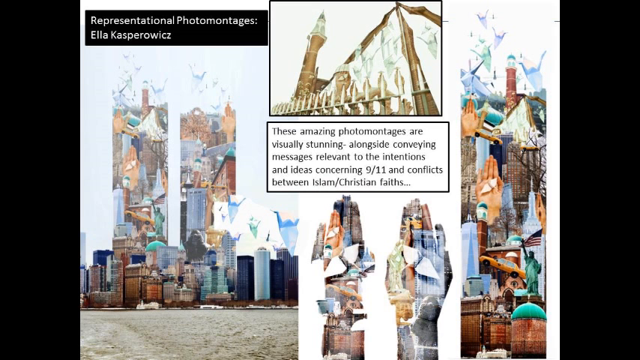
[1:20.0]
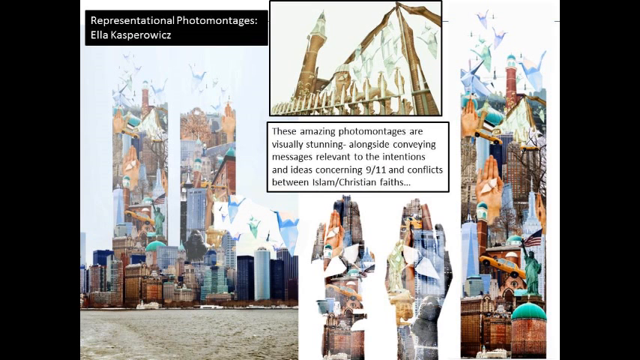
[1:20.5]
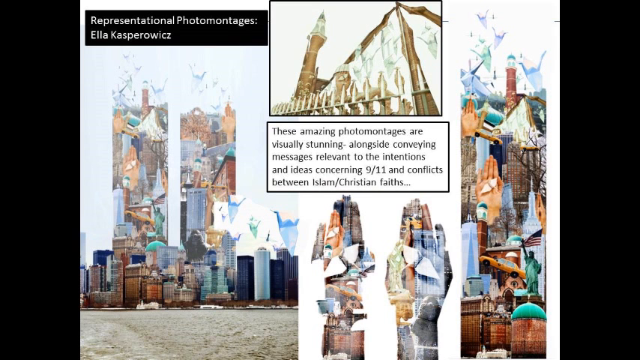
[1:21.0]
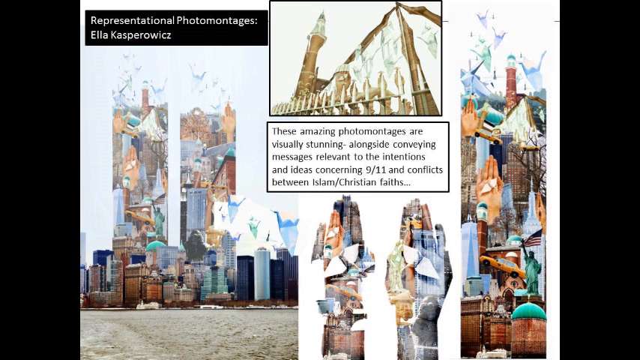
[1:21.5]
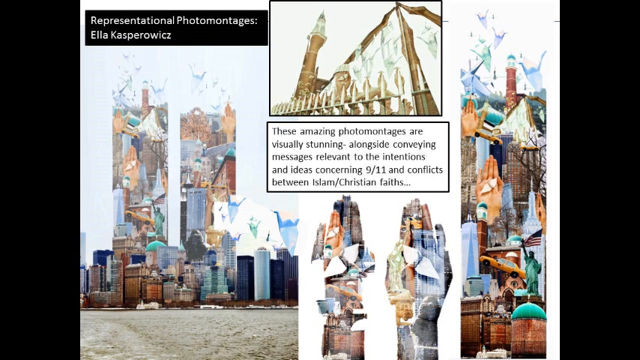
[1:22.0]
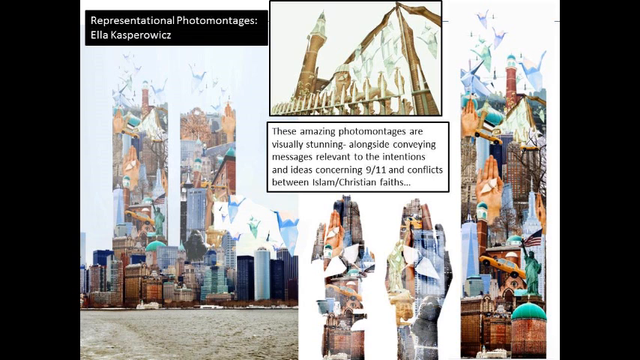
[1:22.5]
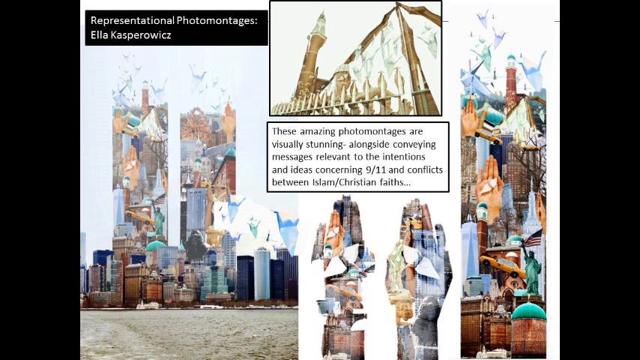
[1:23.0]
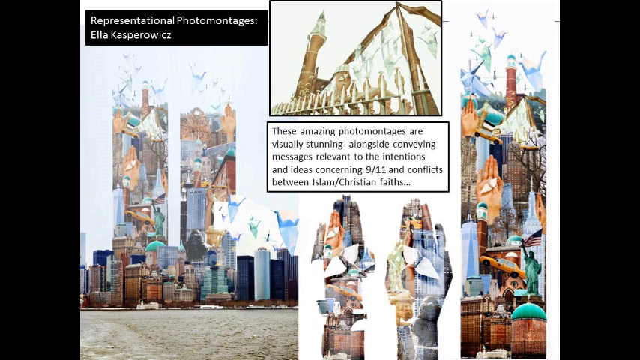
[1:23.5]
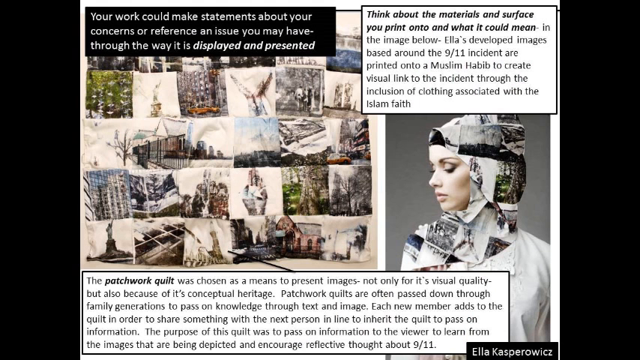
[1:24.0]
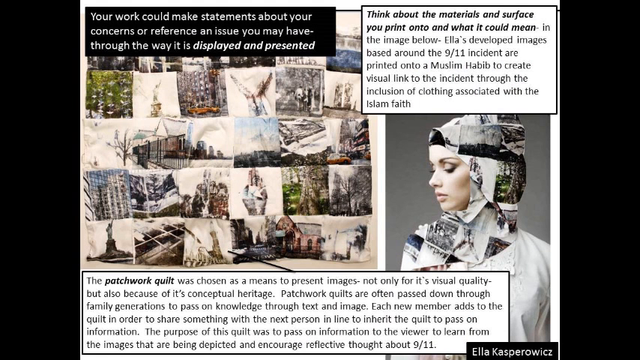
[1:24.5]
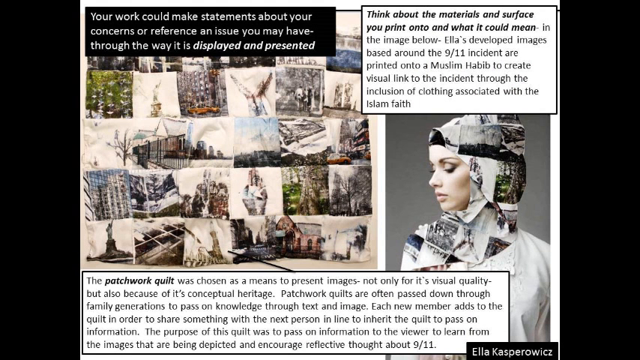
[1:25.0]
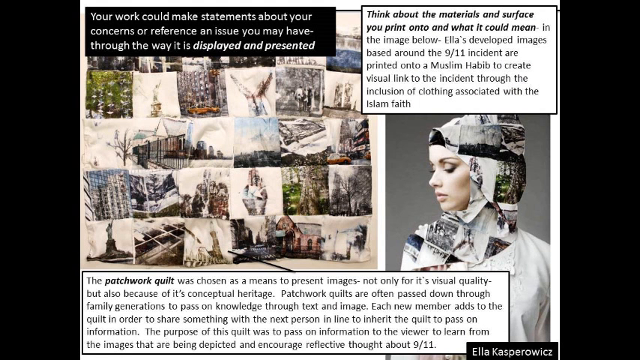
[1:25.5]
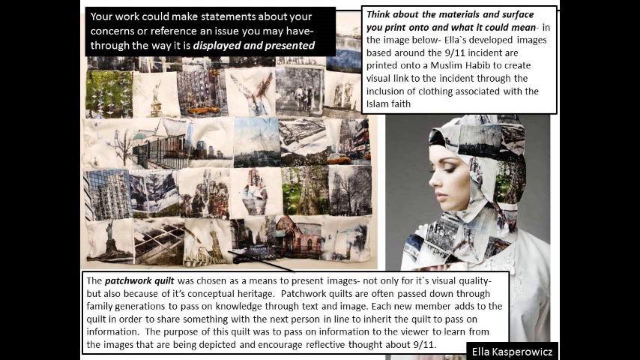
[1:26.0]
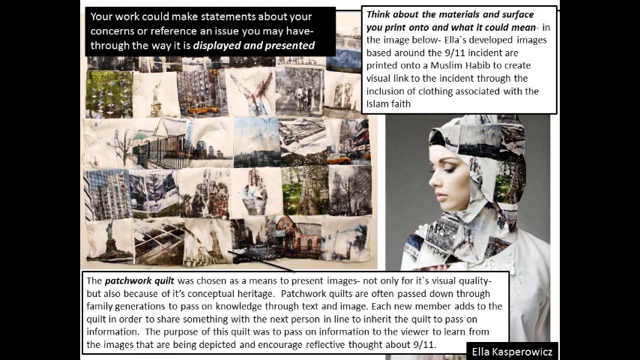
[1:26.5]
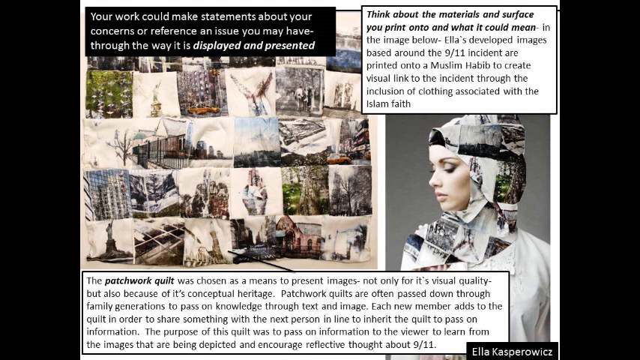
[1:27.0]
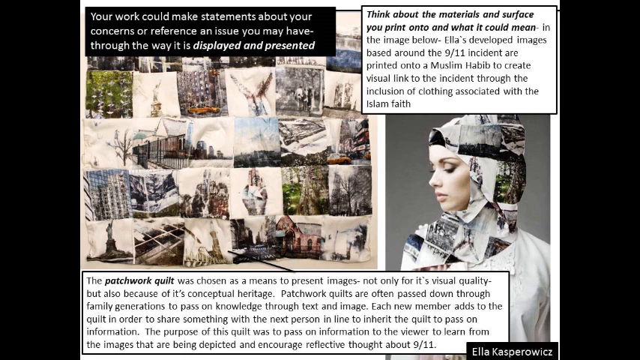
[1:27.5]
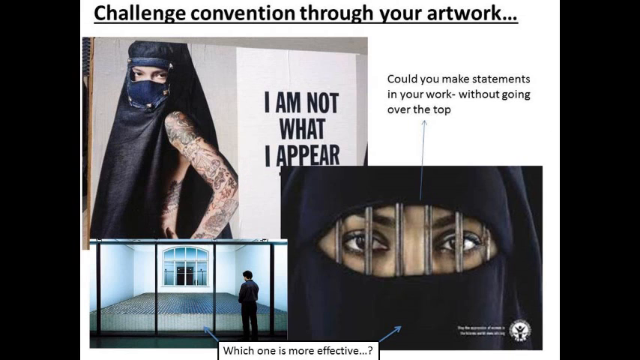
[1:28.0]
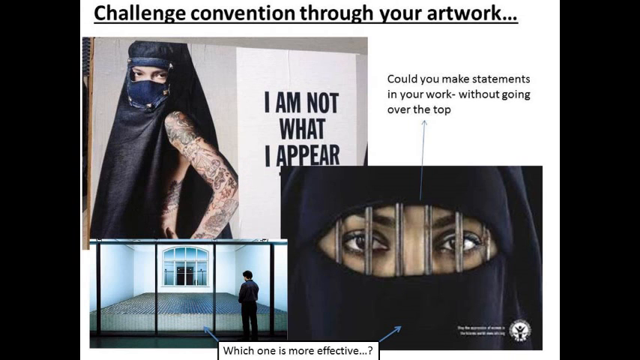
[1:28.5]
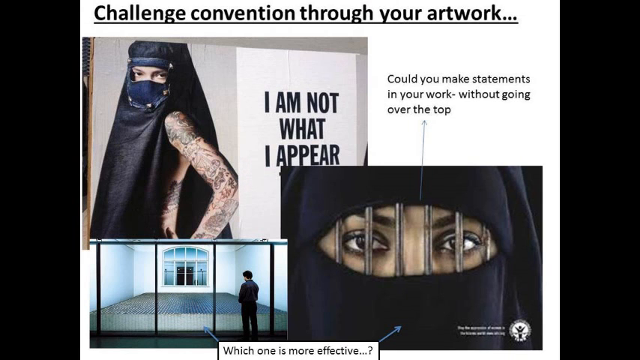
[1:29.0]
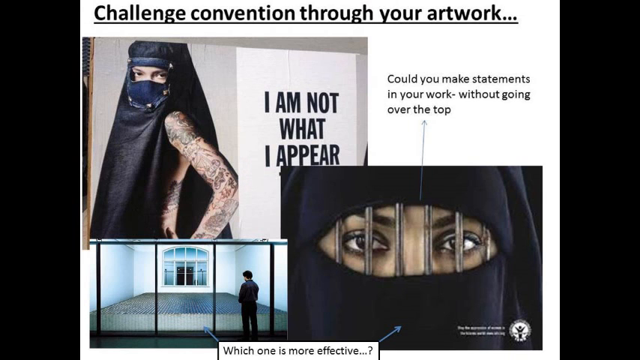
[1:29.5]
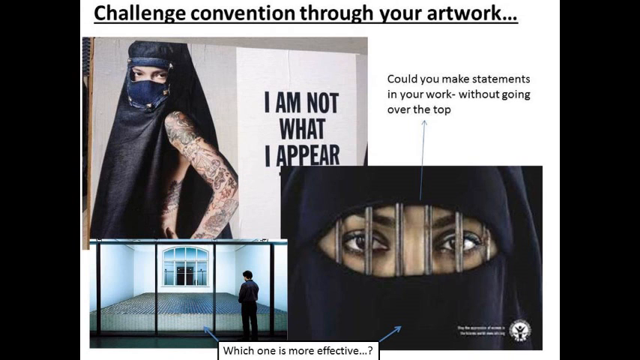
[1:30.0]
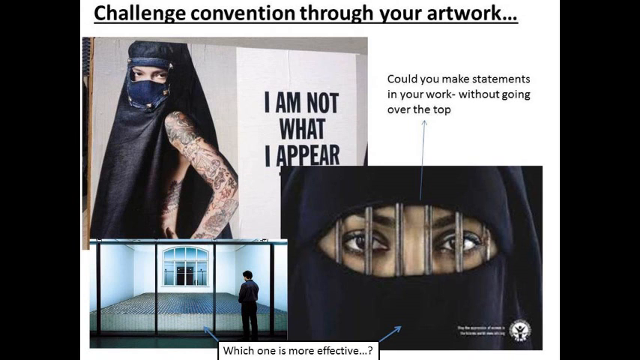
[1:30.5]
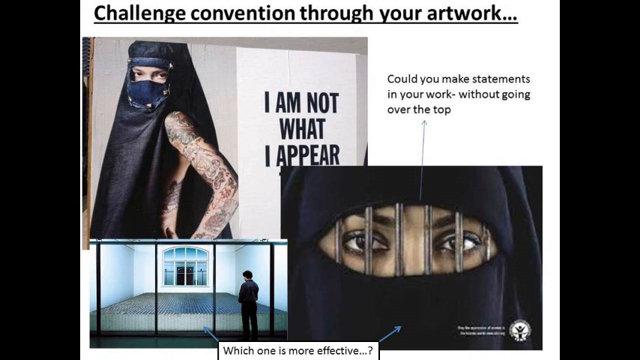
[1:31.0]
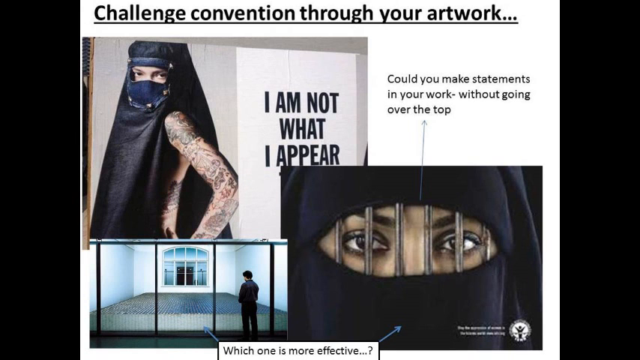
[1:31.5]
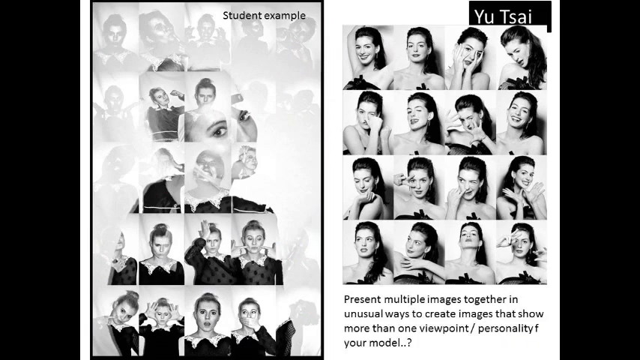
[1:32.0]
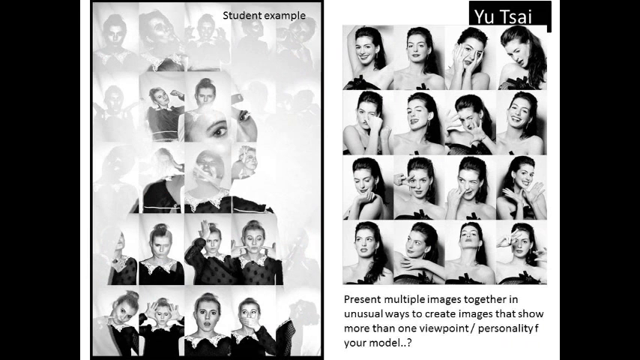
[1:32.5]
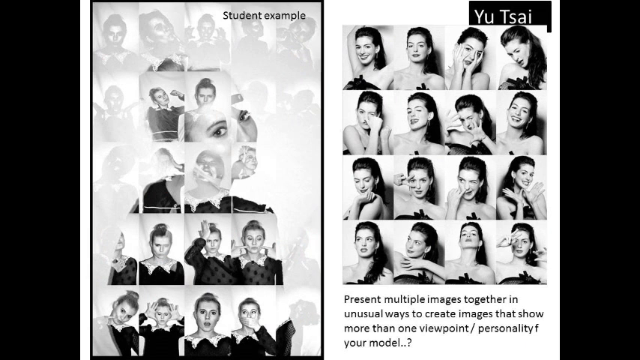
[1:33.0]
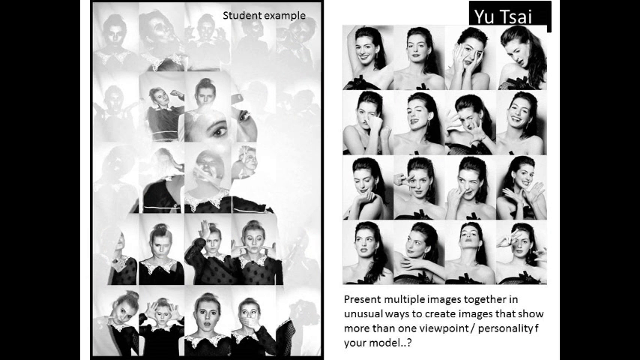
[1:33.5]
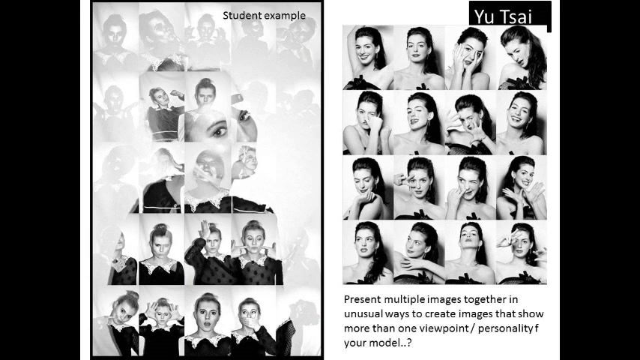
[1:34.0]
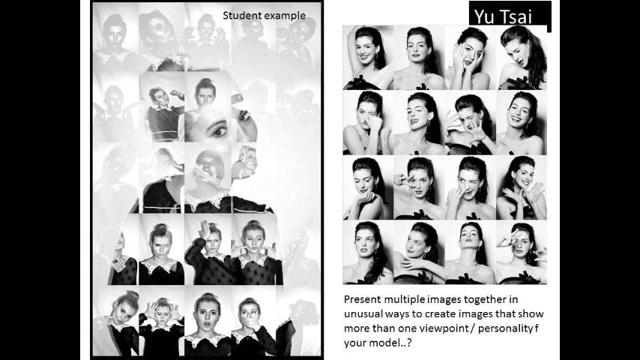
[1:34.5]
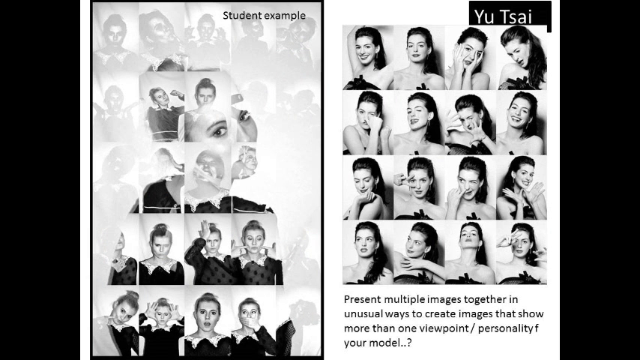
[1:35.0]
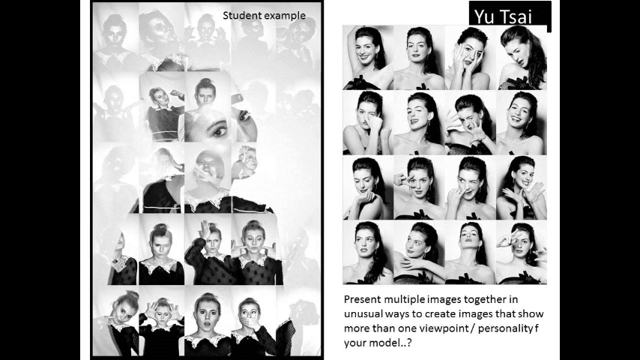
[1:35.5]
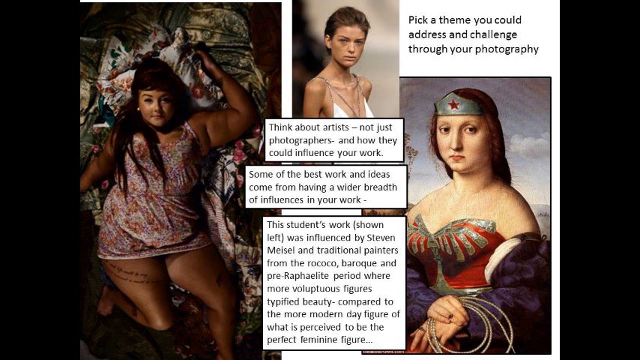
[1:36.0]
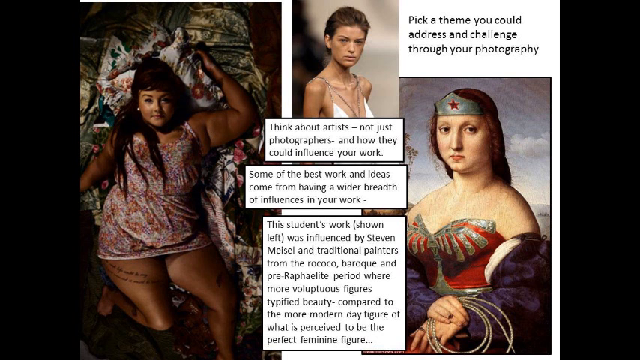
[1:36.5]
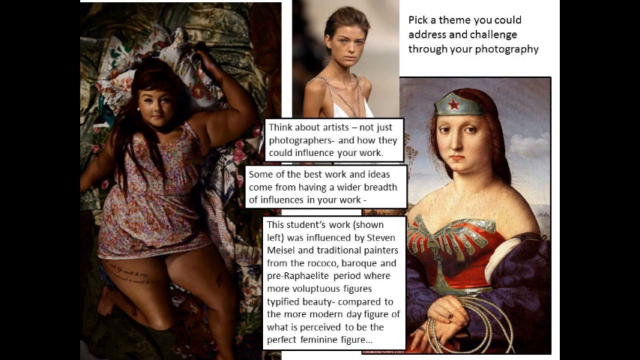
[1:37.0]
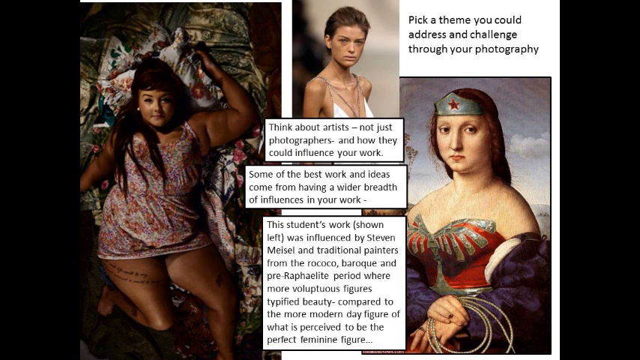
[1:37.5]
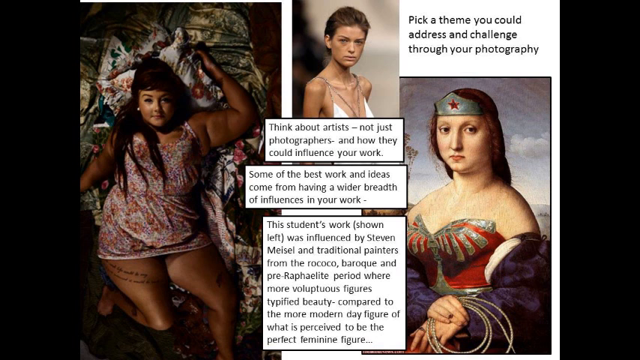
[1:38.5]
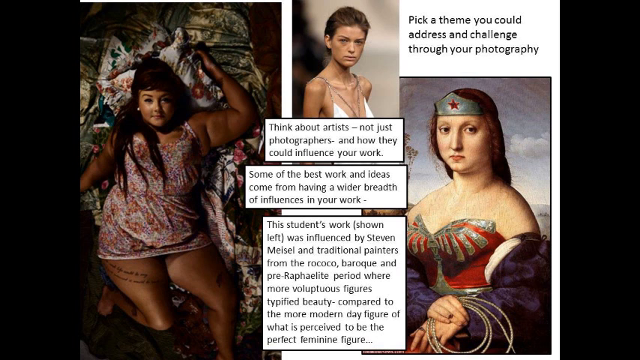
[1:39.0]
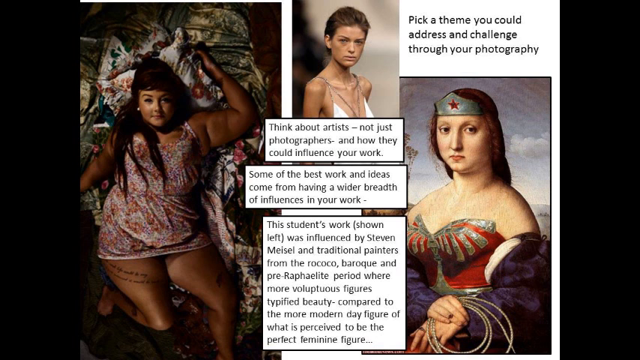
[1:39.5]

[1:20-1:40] Several photos that are not easy to comprehend appear. The first is labelled "Representational Photo Montages by Ella Caspero-Wick", with a description mentioning 9-11 and conflicts between Islam and Christian faith. The next screen shows different photos, including a distinct one of a woman wearing Muslim headgear. At the top of this image the text says "think about the materials and surface you plan onto and what it could mean", and text below refers to images based around the 9-11 incidents being imprinted onto a Muslim. On the left, text above an image says "your workbook makes statements about your concerns or reference an issue you may have through the way it is displayed and presented". The next image shows an Arab or Muslim woman wearing a hijab with a mask but exposing tattoos, with the text "I am not what I appear". Another says "could you make statements in your work without going over the top?" and shows the woman's eyes in a hijab with prison bars across the openings for the eyes. The next photo, by Yiu Tsai, shows a woman in different poses in black and white. On the left is a portrait of a woman marked with other different photos, with "student example" at the top. The image then switches to one of an overweight woman on the left; on the right is an edited Mona Lisa image fitted with a star crown on the forehead, and in the middle is a photo of a very strong woman. Above the fake Mona Lisa image it says "pick a theme you could press and challenge to look photographic".